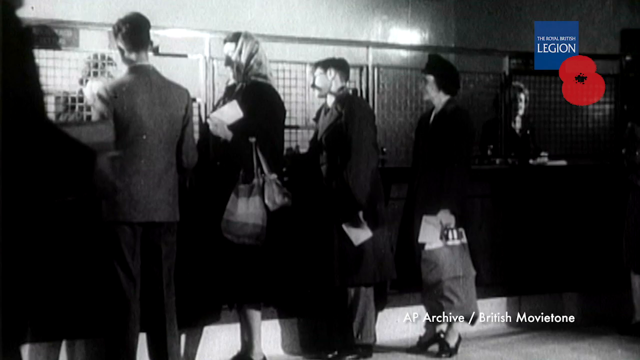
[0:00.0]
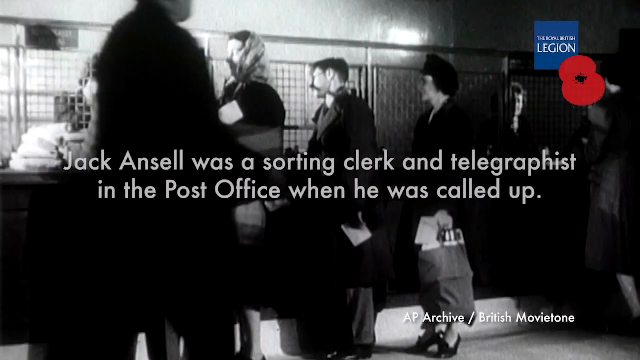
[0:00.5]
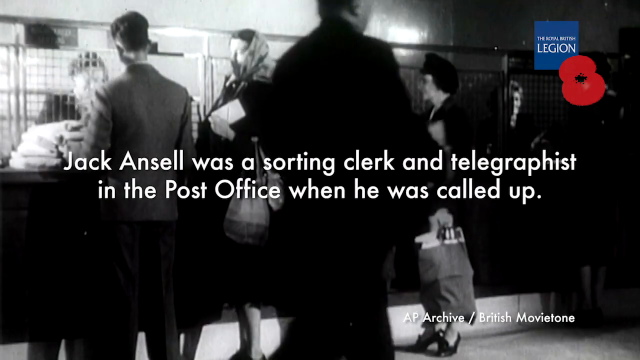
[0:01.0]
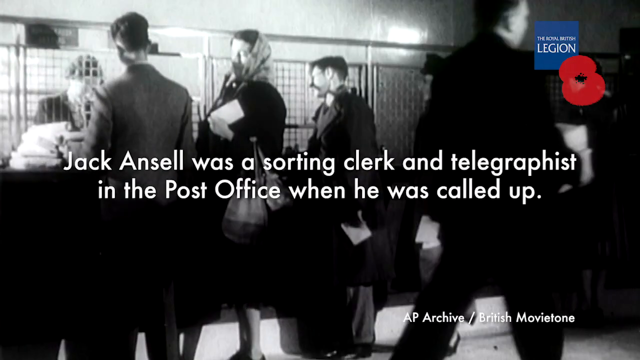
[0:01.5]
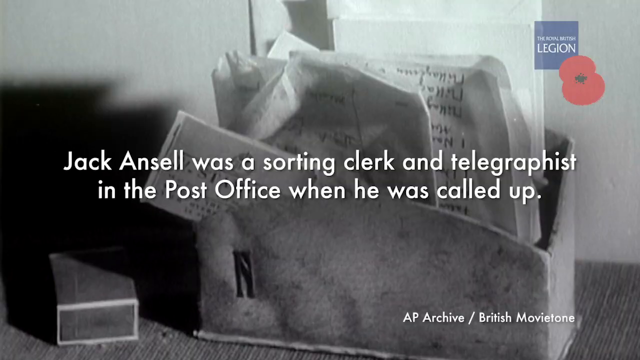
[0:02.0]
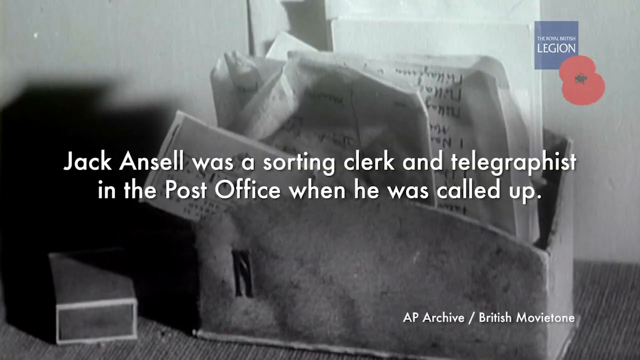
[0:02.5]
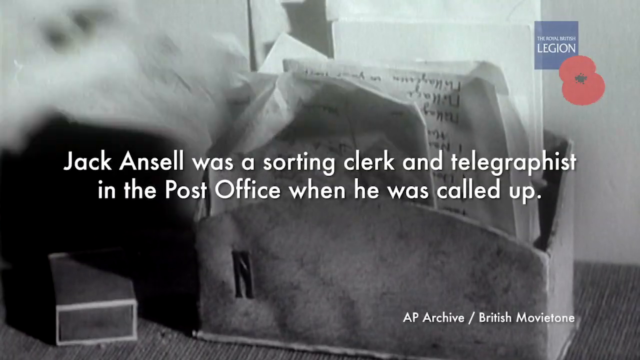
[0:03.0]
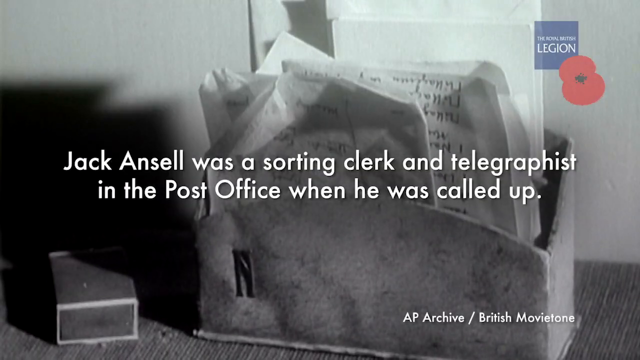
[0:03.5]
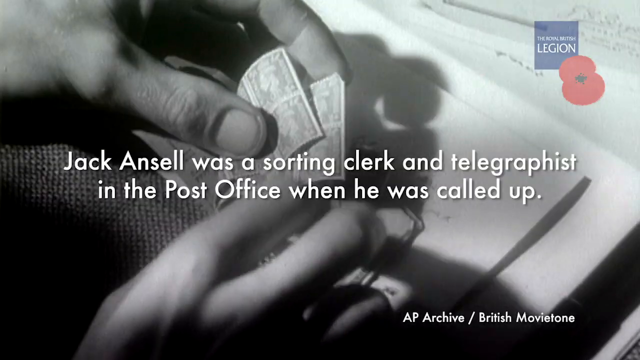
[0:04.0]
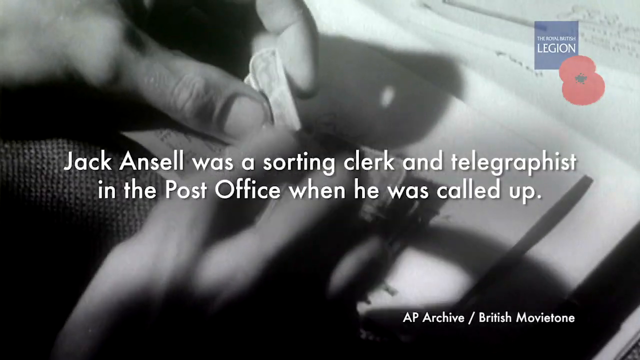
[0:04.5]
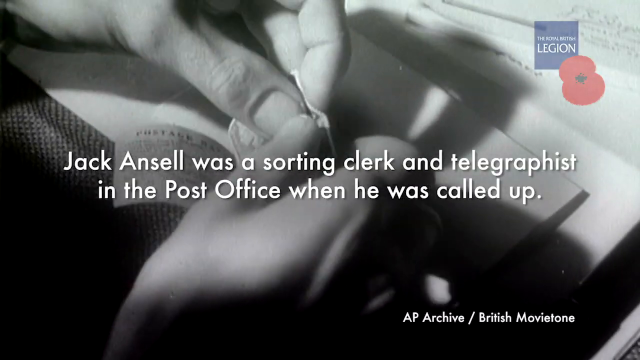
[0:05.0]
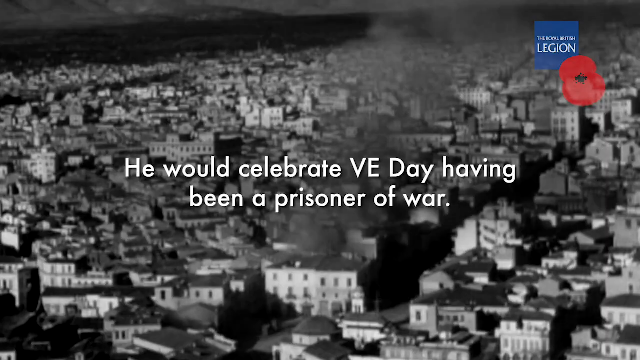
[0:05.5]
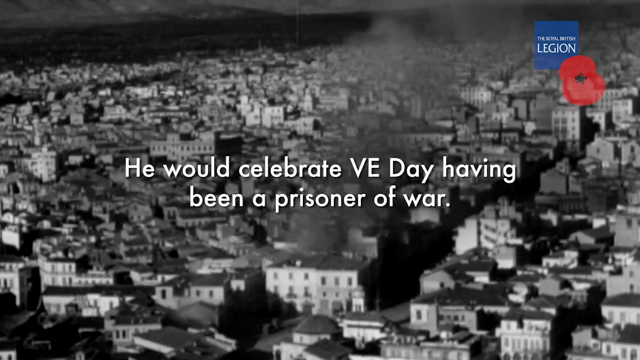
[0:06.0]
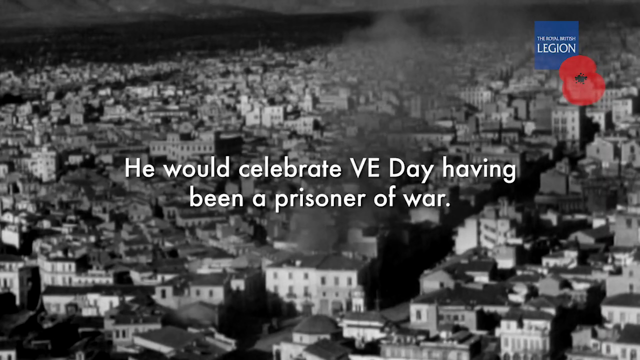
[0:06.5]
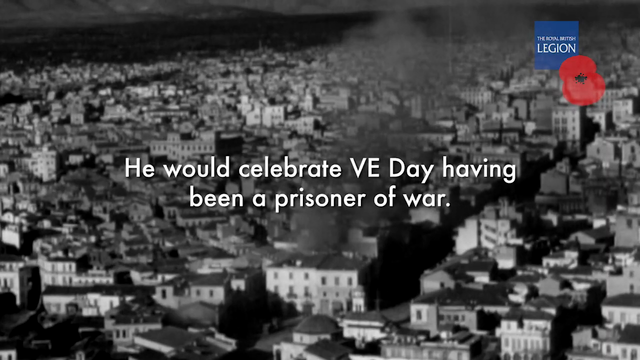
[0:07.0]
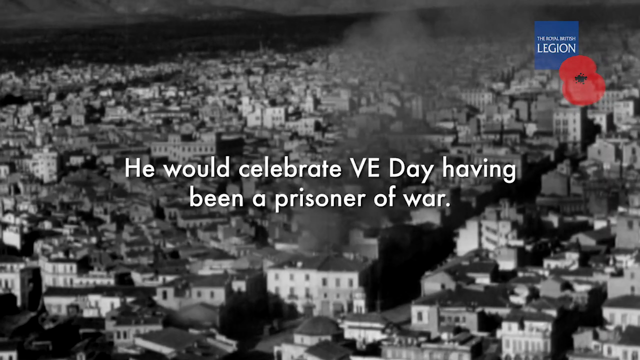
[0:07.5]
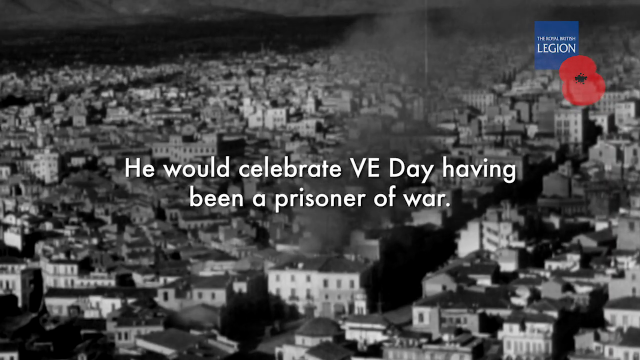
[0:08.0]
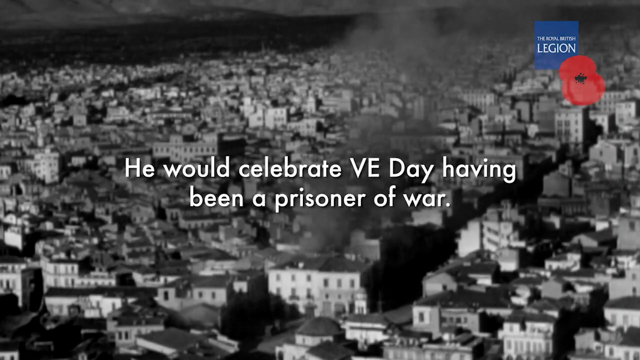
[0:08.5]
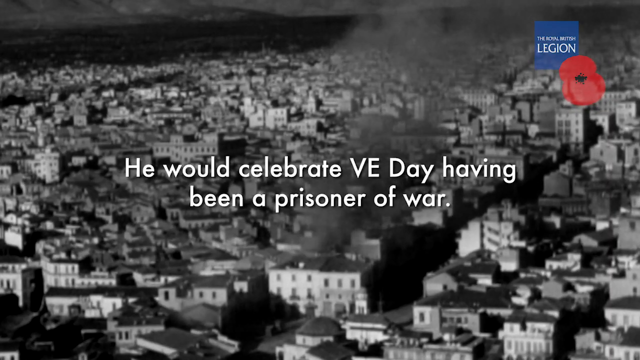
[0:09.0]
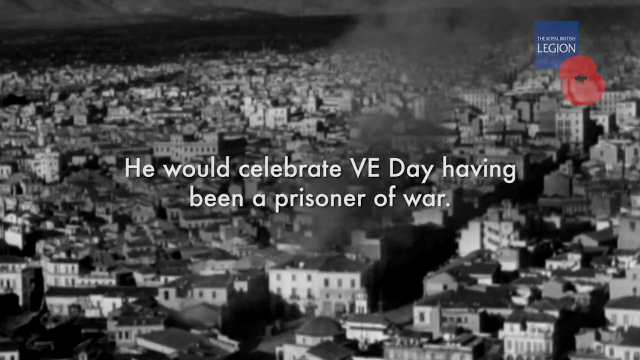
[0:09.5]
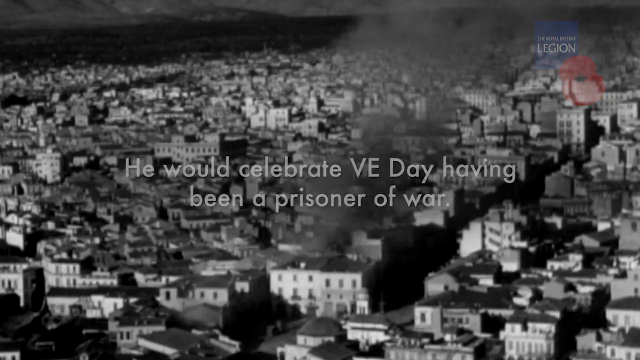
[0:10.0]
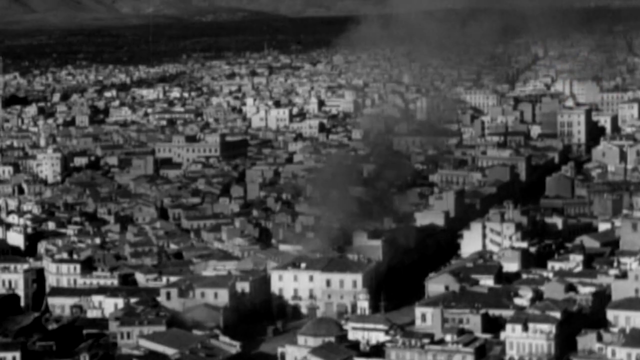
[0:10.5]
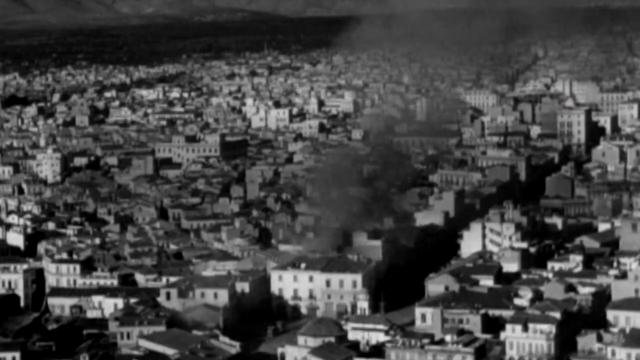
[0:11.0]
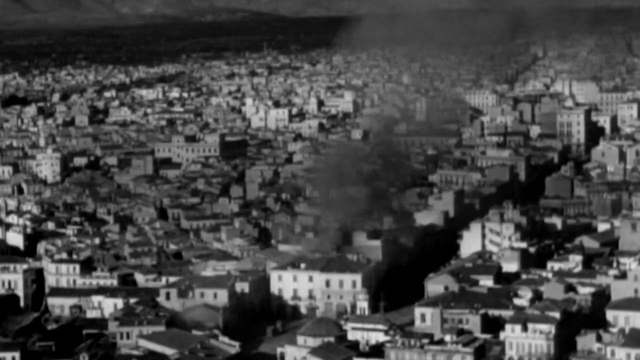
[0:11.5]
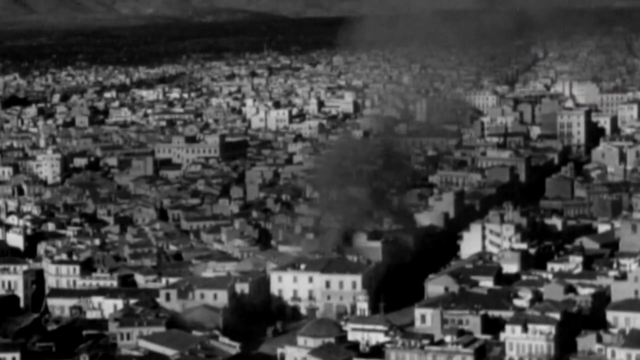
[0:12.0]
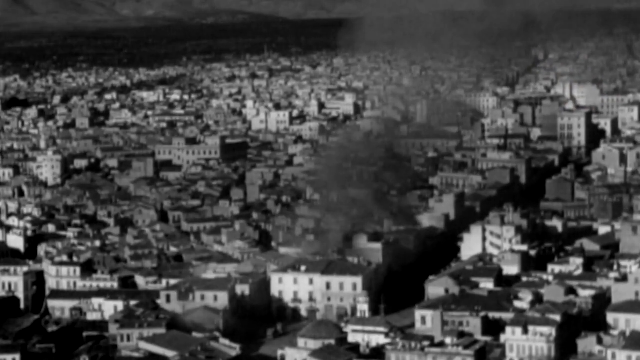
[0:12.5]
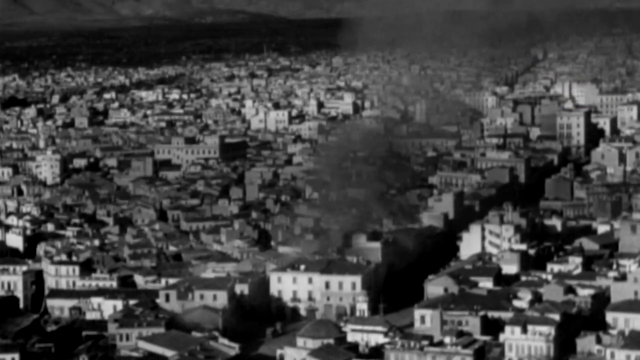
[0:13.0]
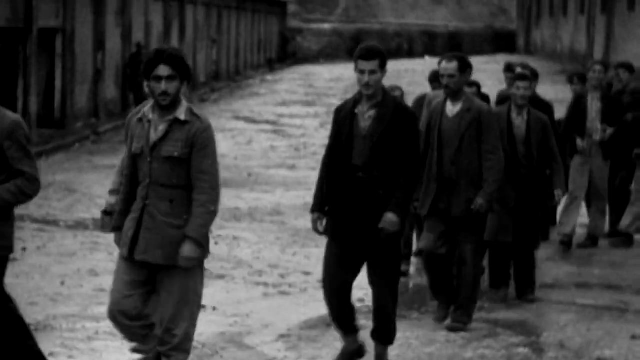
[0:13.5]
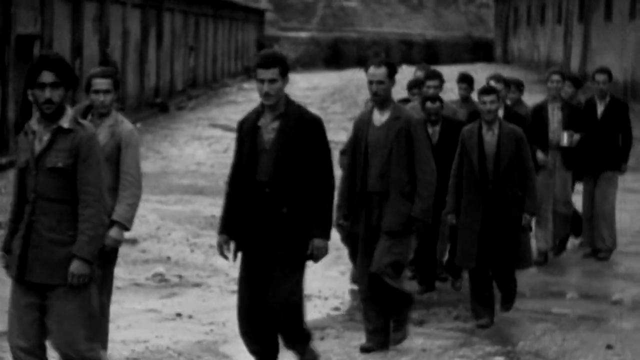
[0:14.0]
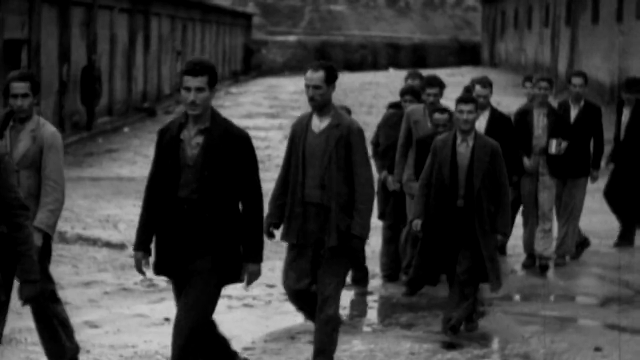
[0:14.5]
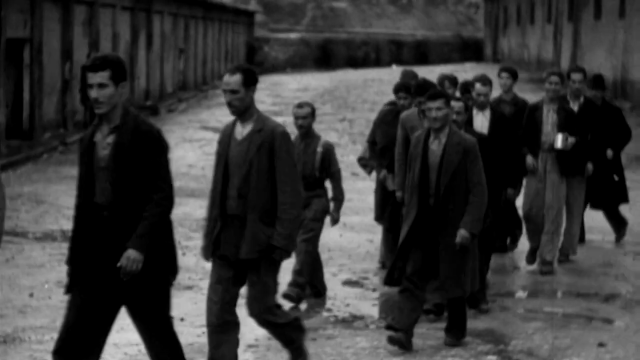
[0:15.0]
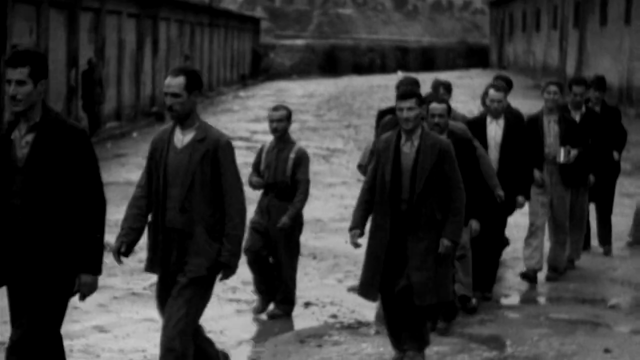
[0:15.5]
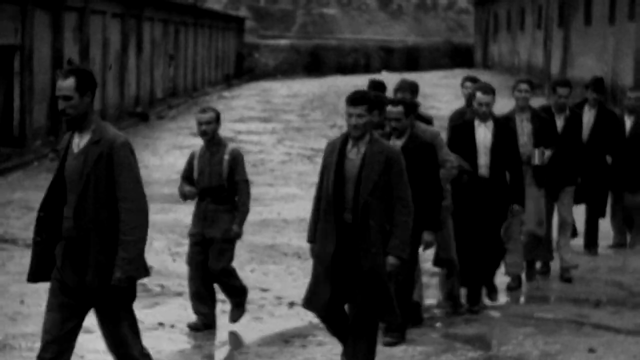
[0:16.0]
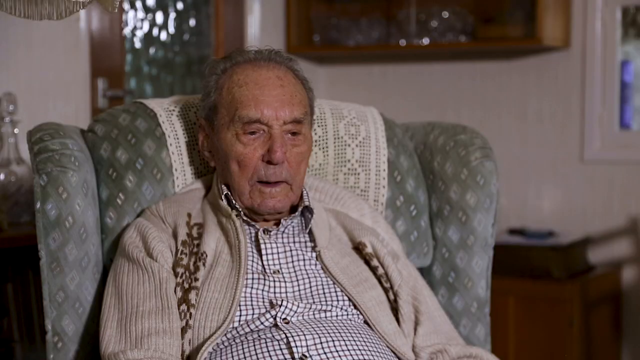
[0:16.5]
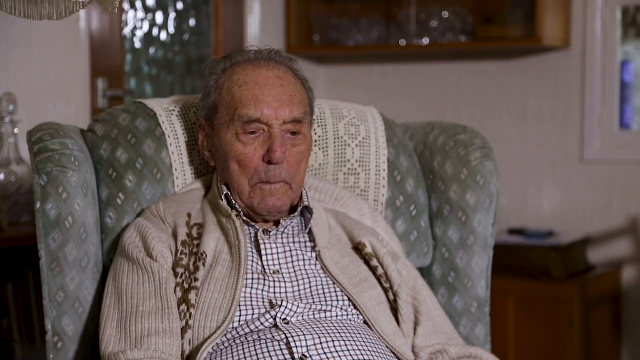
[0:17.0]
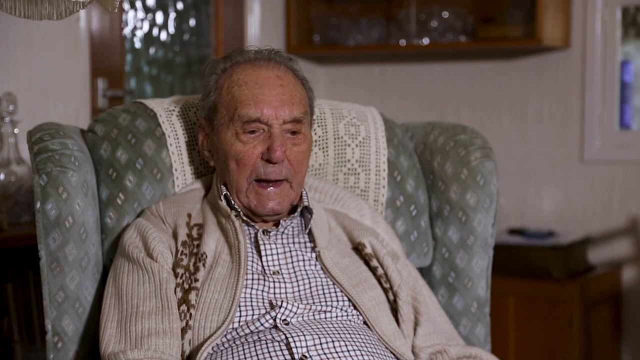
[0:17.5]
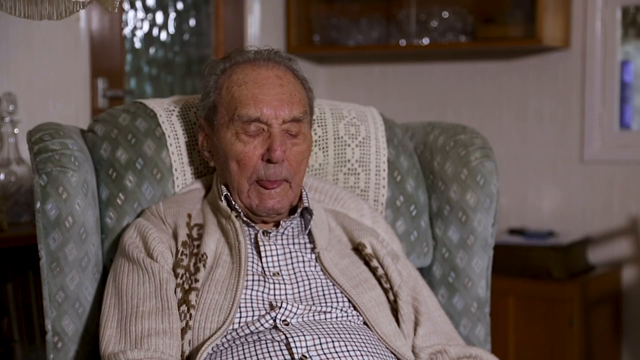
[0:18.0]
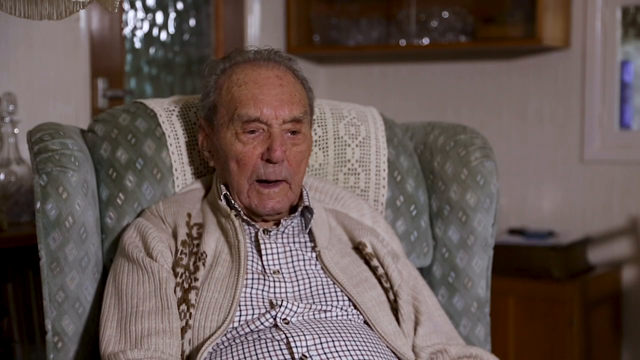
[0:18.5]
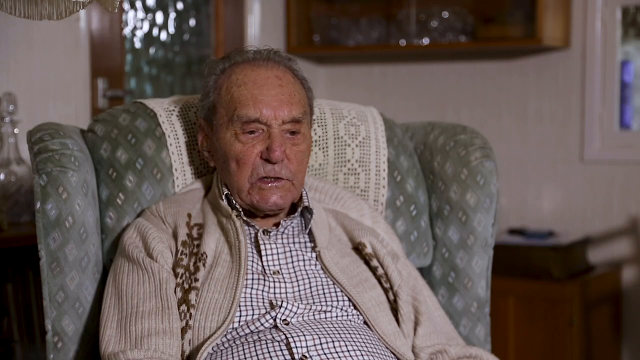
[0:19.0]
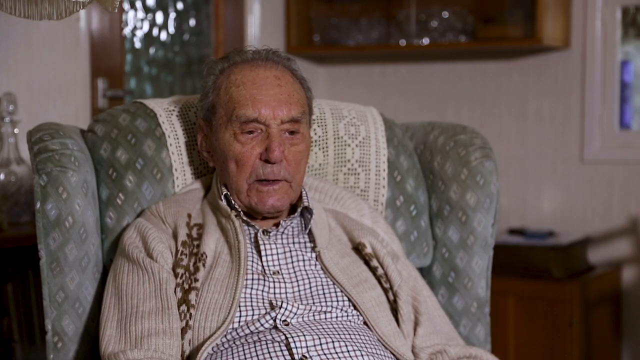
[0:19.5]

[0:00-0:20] A line of men and women in black and white appear to be standing in line, perhaps at a bank teller's window. A logo in the top right reads "Legion." Text on screen says "Jack Ansel was a sorting clerk and telegraphist in the post office when he was called up. He would celebrate VE Day having been a prisoner of war." A black-and-white picture of a town follows, showing many men walking. Then there is a quick shot of an elderly Caucasian man seated in a chair, speaking. He wears a check shirt and a tan sweater with decor on each side of the lapel, has brown hair combed back, and sits in a light gray chair with a pattern on it.